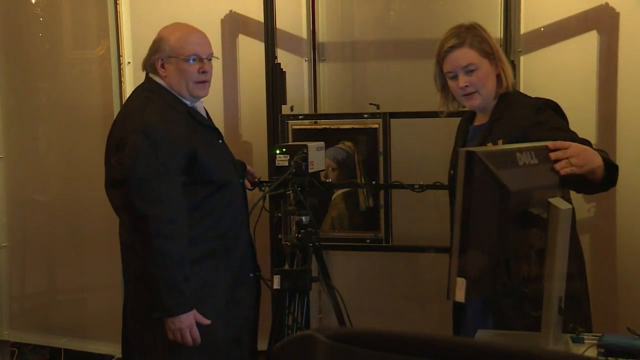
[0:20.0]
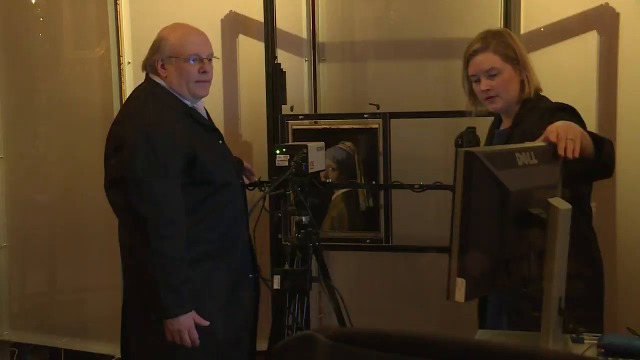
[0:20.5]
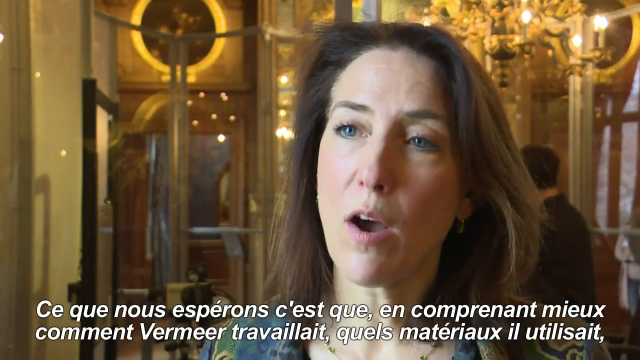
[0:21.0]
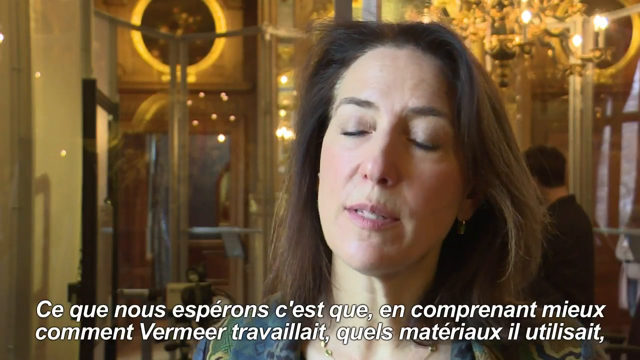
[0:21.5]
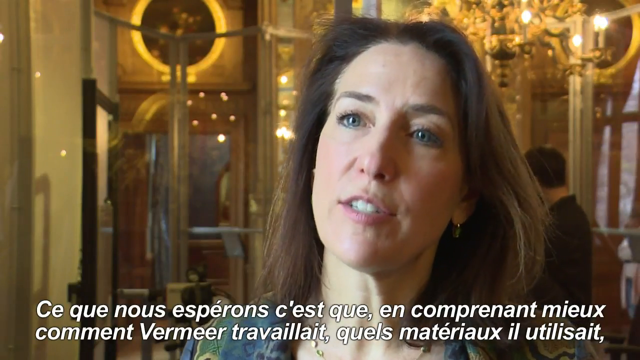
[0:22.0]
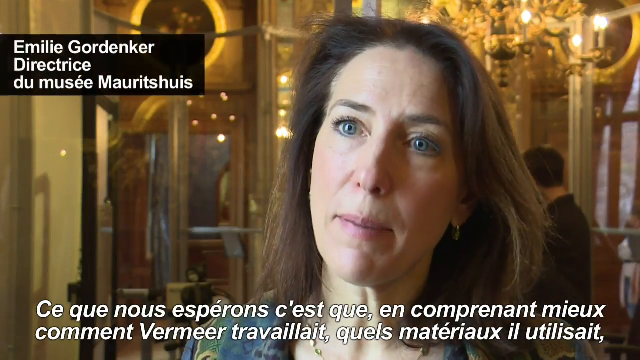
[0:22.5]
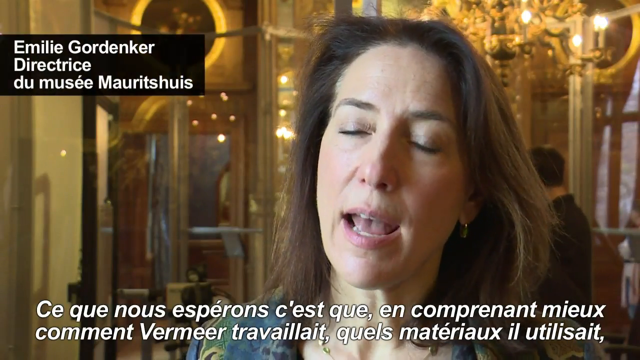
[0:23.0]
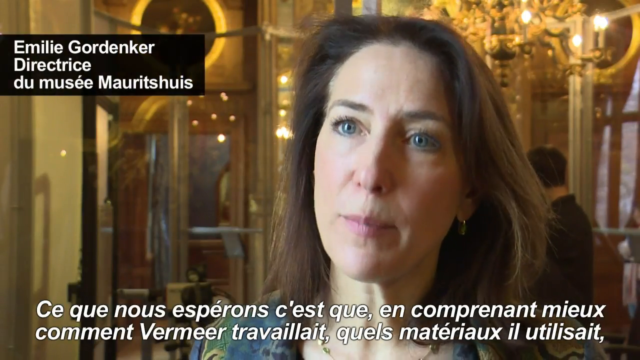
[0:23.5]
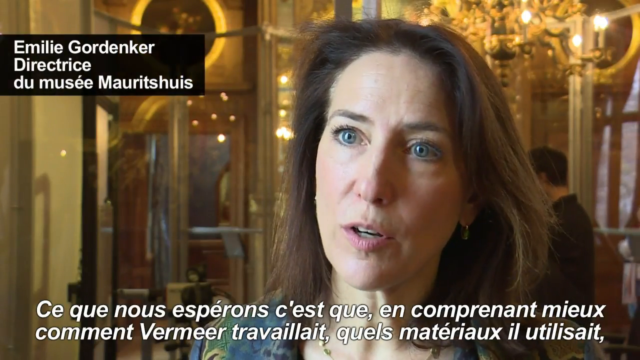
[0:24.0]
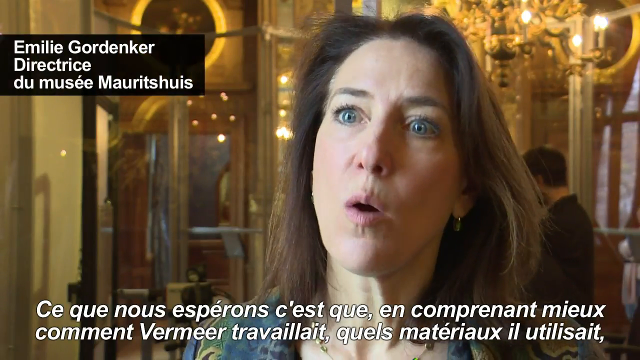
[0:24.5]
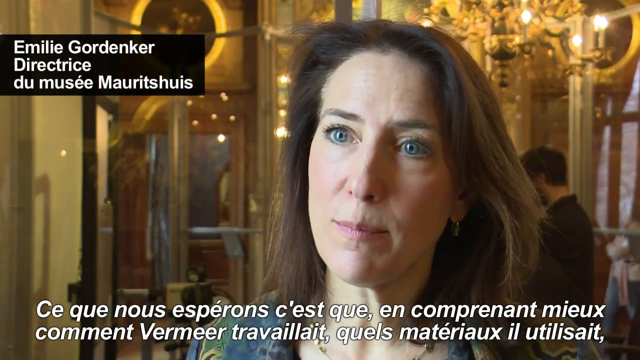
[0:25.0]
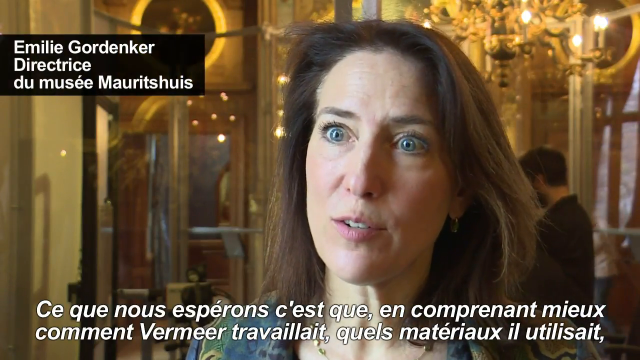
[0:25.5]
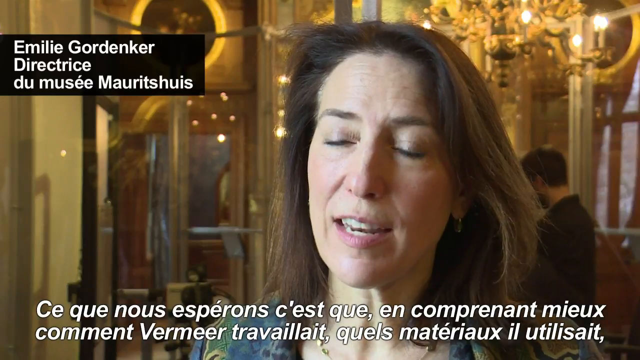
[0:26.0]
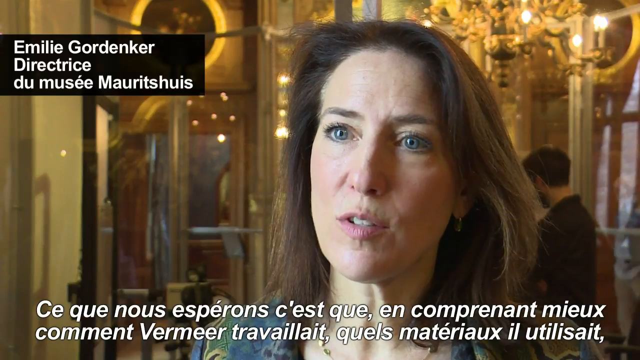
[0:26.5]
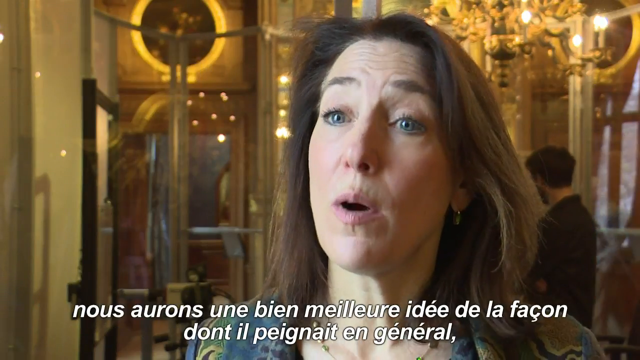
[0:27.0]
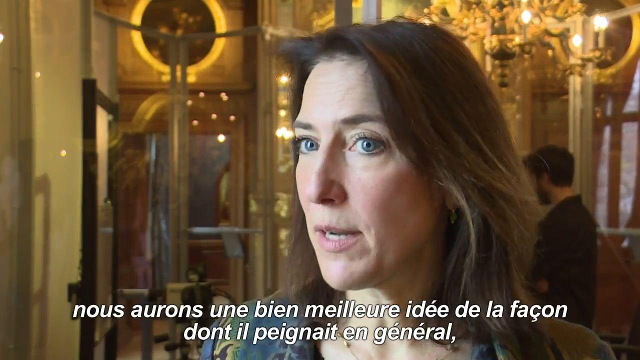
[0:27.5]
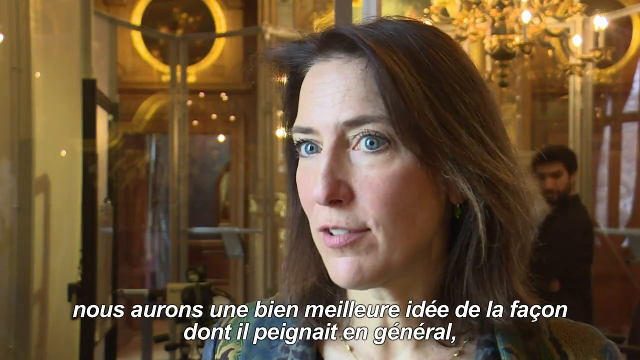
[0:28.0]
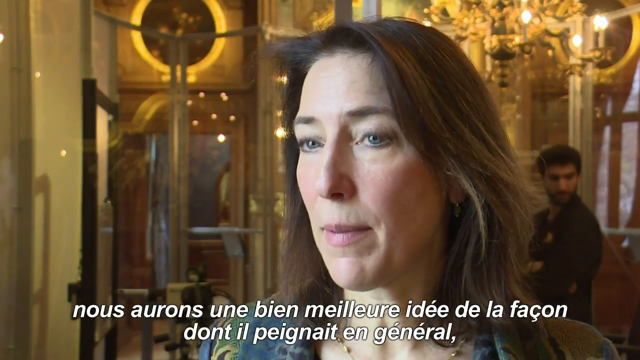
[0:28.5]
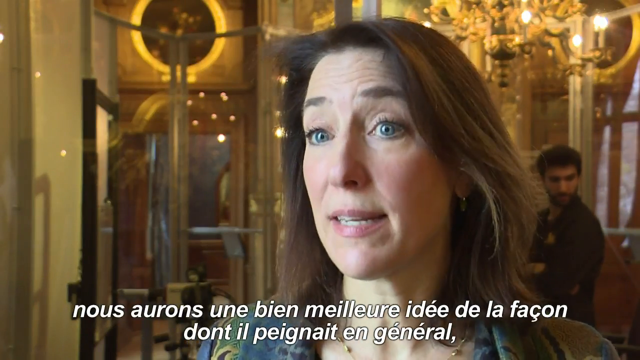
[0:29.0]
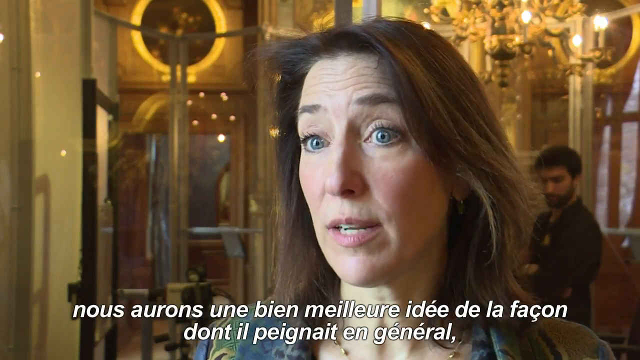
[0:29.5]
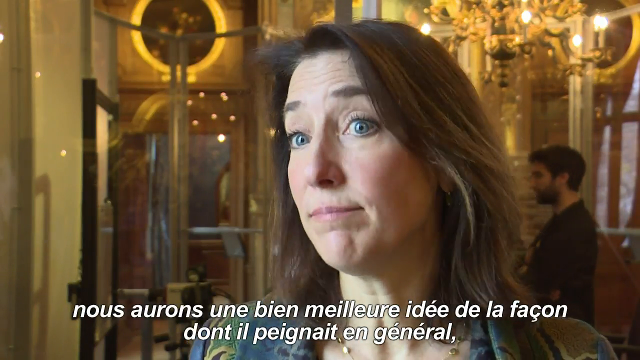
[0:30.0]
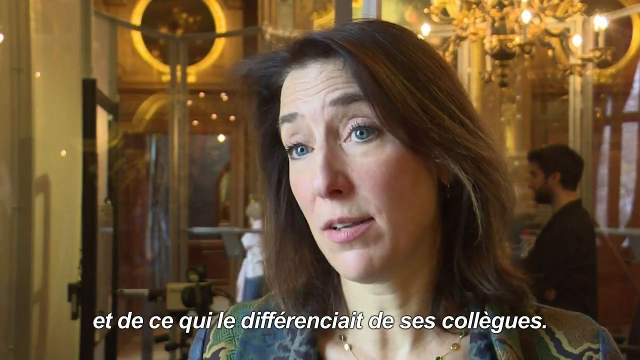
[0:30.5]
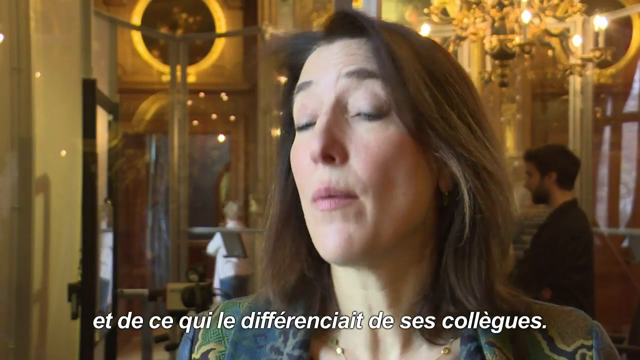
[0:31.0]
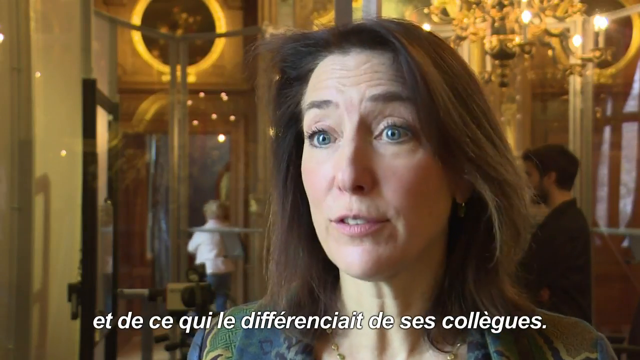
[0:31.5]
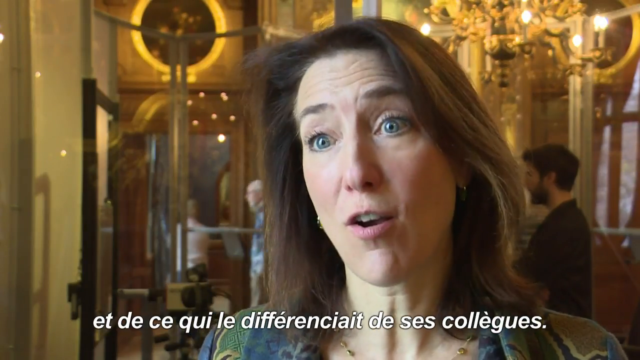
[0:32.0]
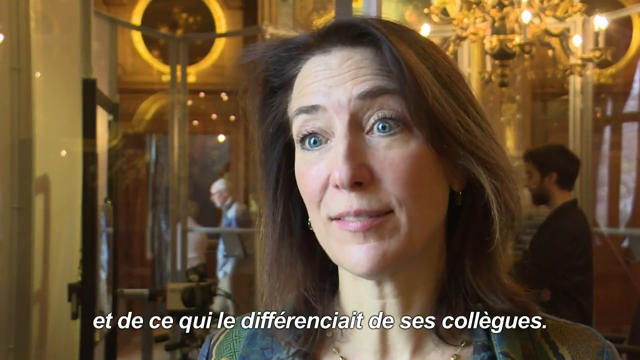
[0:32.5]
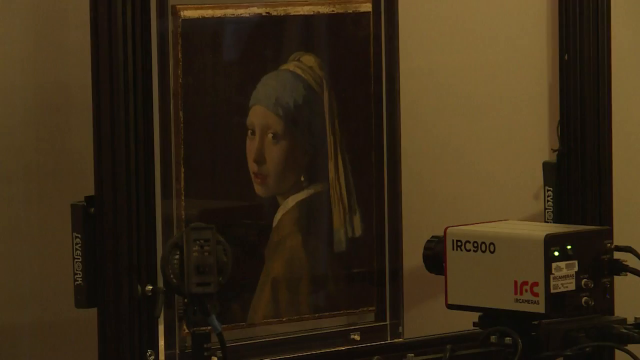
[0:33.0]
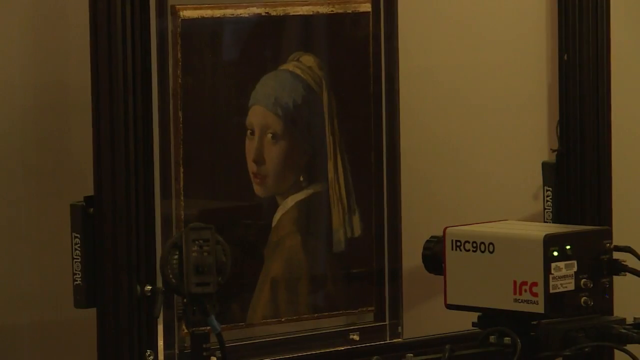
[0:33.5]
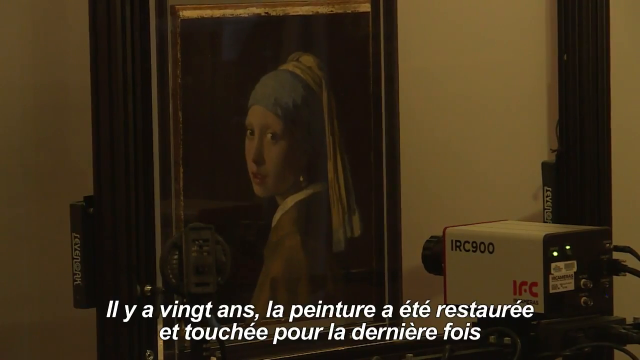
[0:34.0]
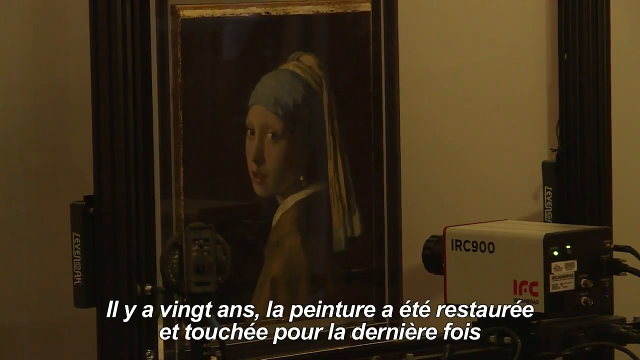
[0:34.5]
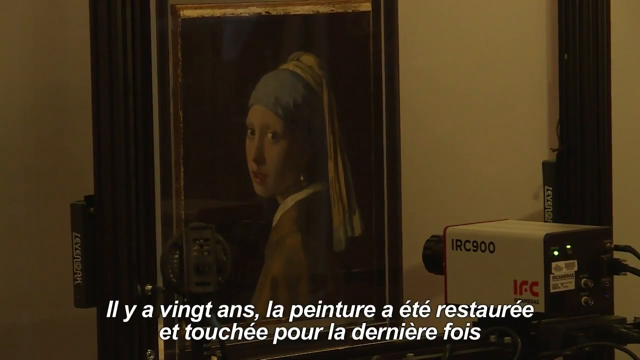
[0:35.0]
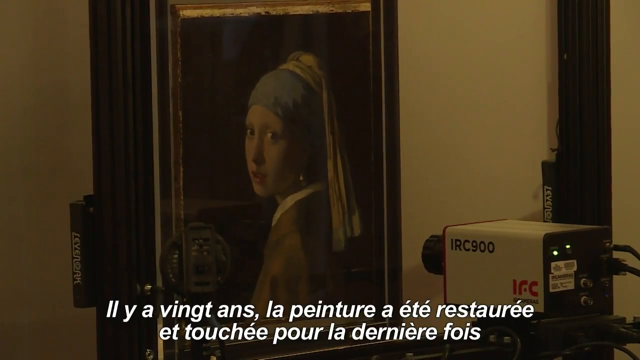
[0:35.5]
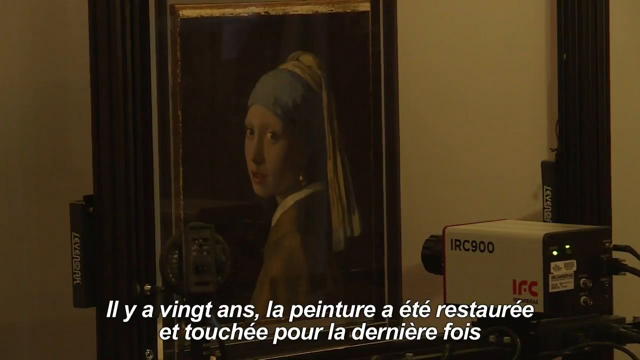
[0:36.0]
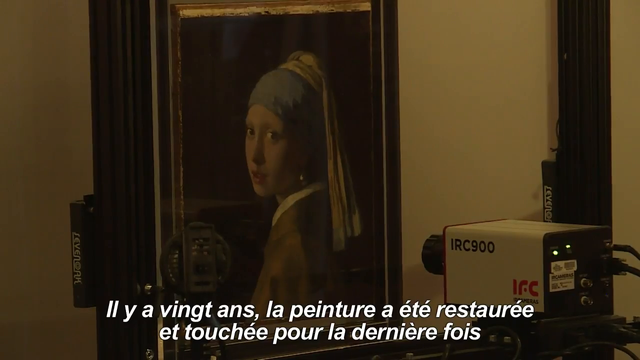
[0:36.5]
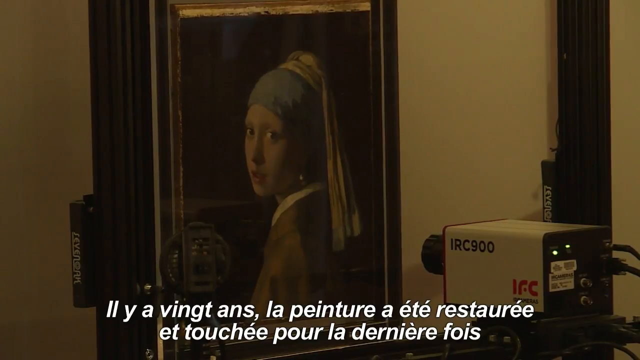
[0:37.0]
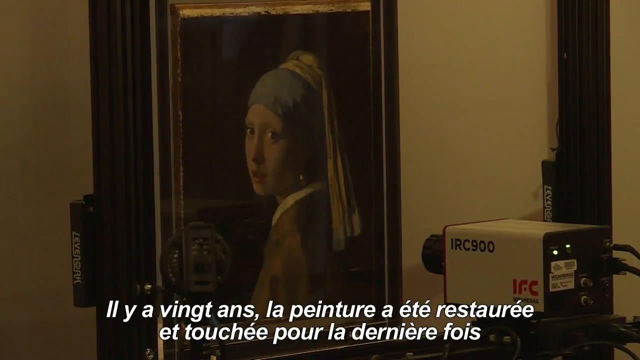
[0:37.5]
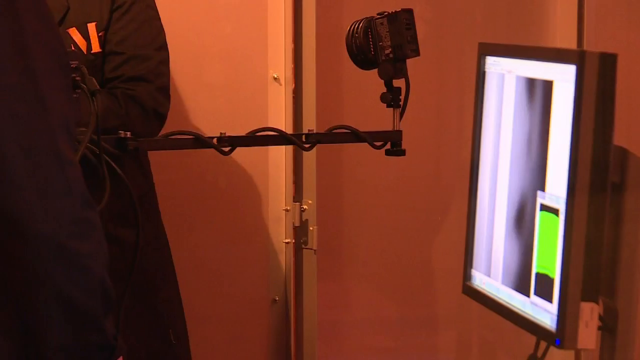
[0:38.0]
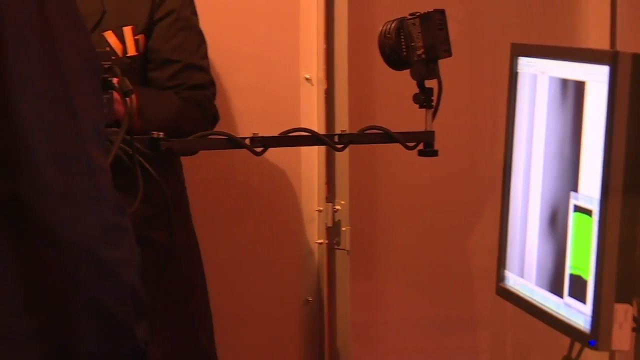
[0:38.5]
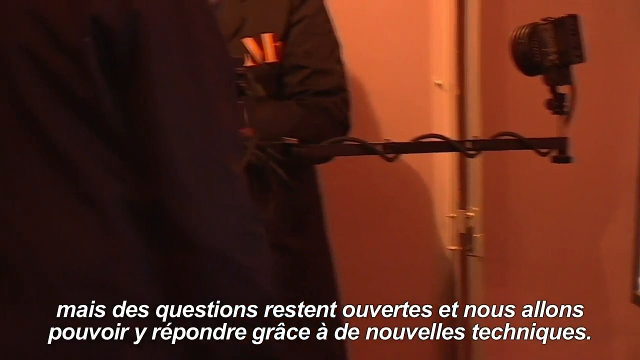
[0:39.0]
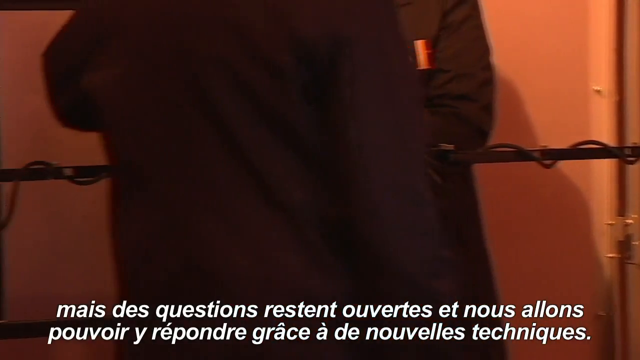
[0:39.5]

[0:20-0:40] The woman on the right evaluates the computer screen, and then the video cuts to an interview with a lady named Emily, who is talking, with subtitles underneath her. She is in a room with a gold chandelier behind her, and she has blue eyes. A gentleman behind her to the right appears to be looking around, and people walk around behind her, including what seems to be an older couple, a man and a woman, possibly in a museum or something similar. The video goes back to the painting, showing the camera or whatever equipment they are using to evaluate it, and people look closely at the computer screen. Toward the end, everything appears to go red: the walls, the picture and everything. At the end, the camera has moved far away from the painting.